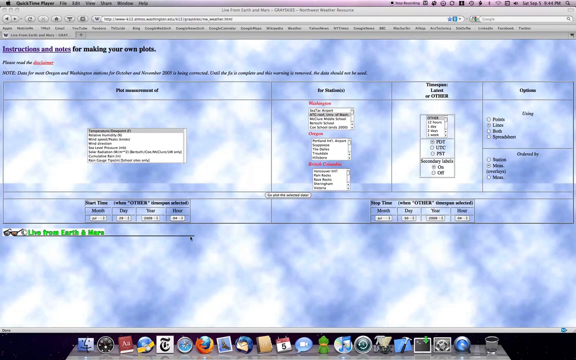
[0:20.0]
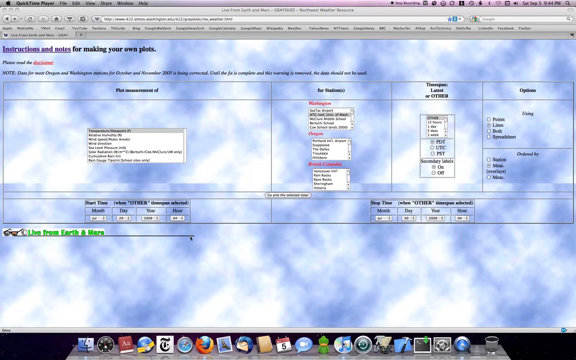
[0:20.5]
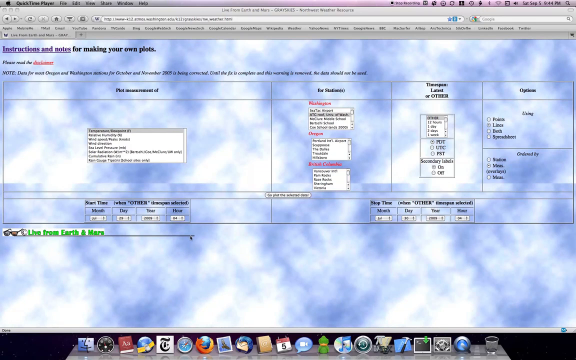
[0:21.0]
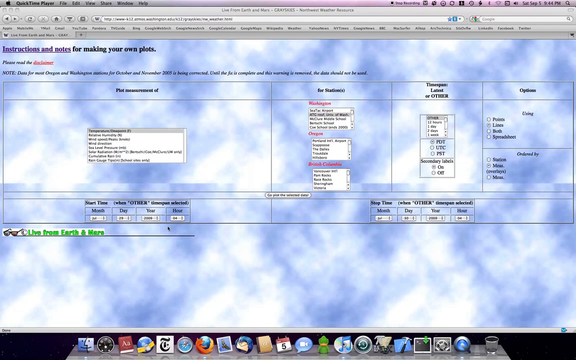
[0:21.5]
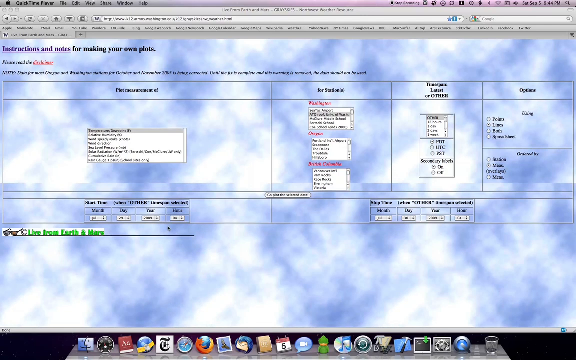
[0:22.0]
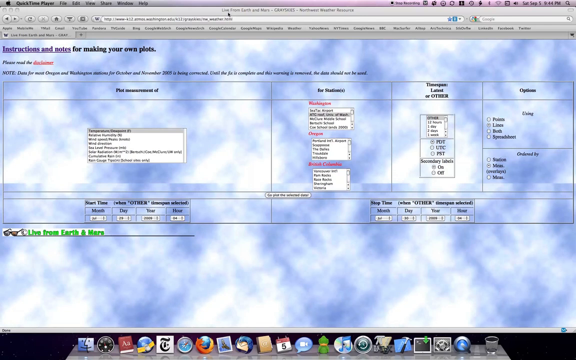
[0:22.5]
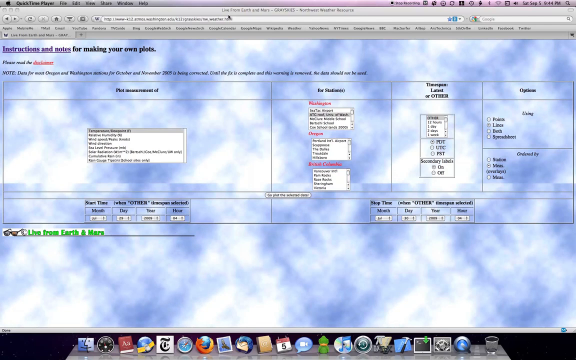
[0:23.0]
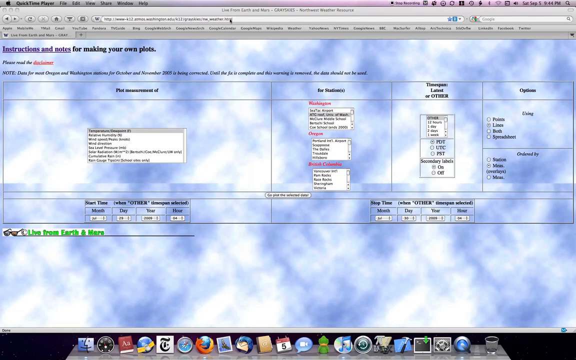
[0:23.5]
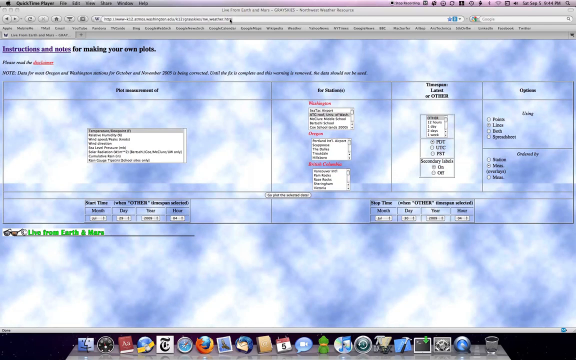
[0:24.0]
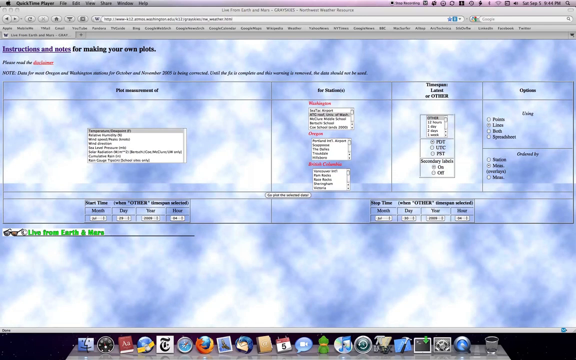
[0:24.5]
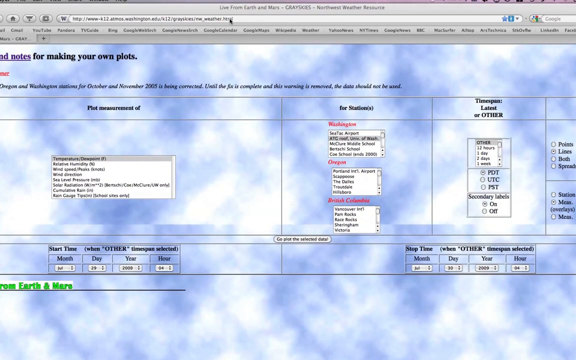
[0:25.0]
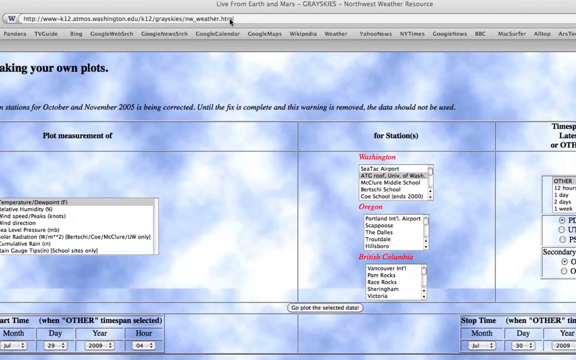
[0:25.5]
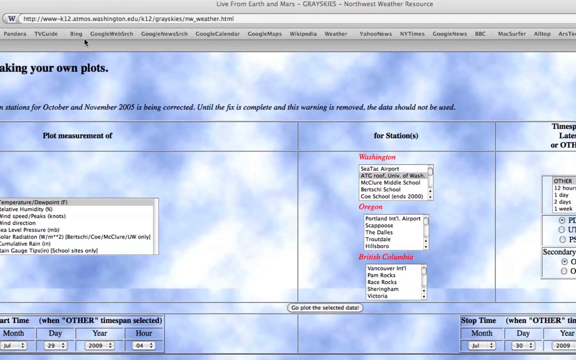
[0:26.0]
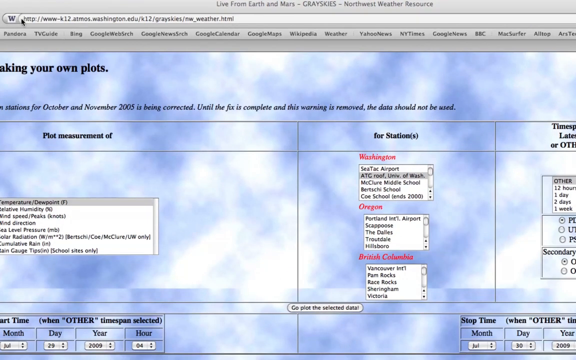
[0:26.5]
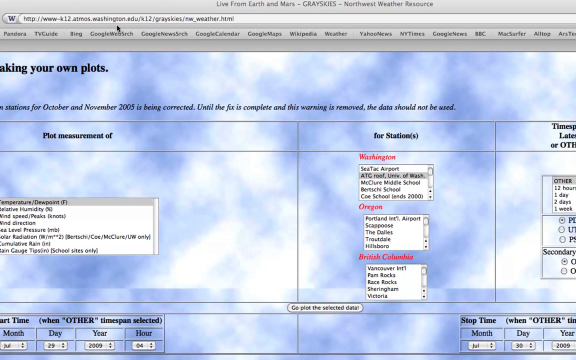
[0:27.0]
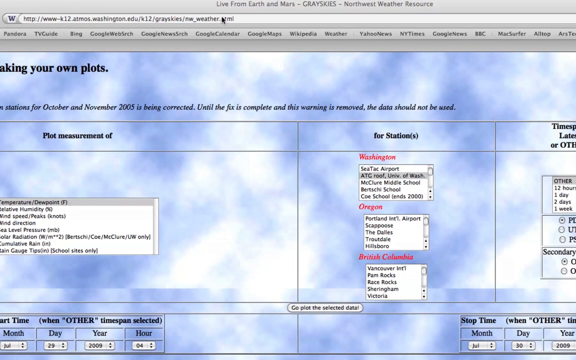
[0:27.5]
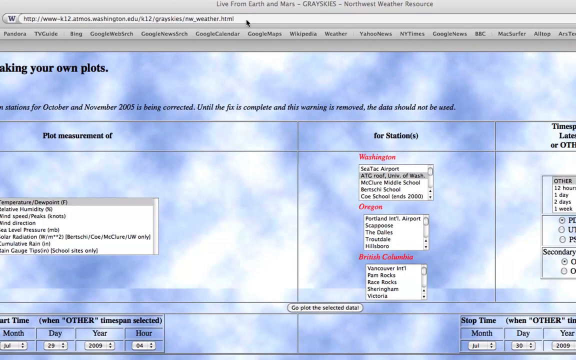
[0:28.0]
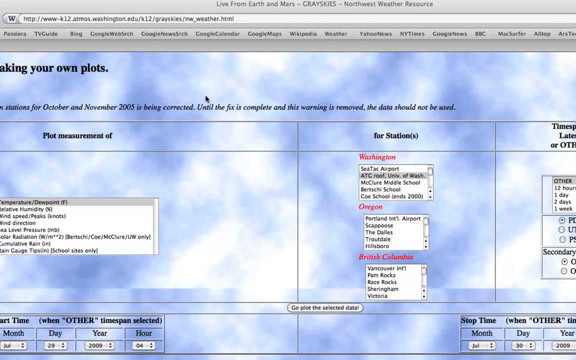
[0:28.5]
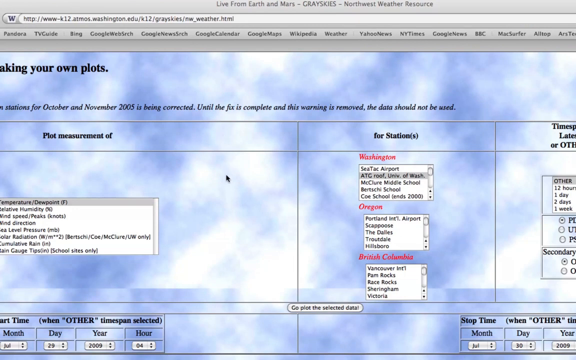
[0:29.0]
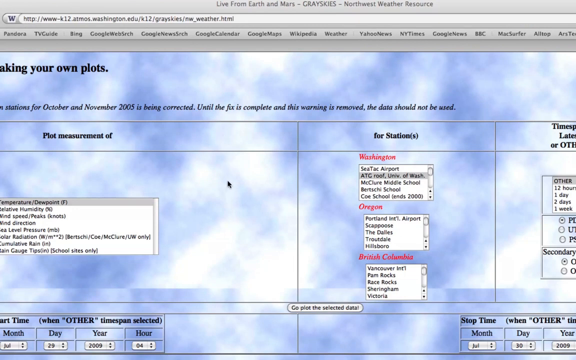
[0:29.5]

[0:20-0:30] The screen shows someone's Mac Apple desktop computer, recognizable by the dock at the bottom with all the different applications and by the Apple in the top left-hand corner. The text "QuickTime player" is visible, and the skin on the QuickTime Player is a blue cloud background. The mouse moves up to the top, and the view zooms in on the web address as the cursor kind of highlights over it. Zoomed in, the web address reads "HTTP//www.k12.atmos.Washington.edu/k12/greyskies/Ew_weather.html".